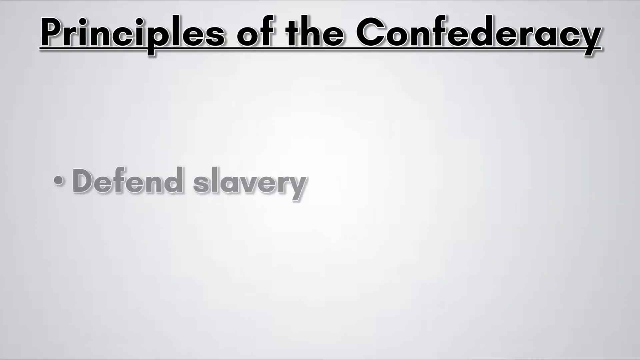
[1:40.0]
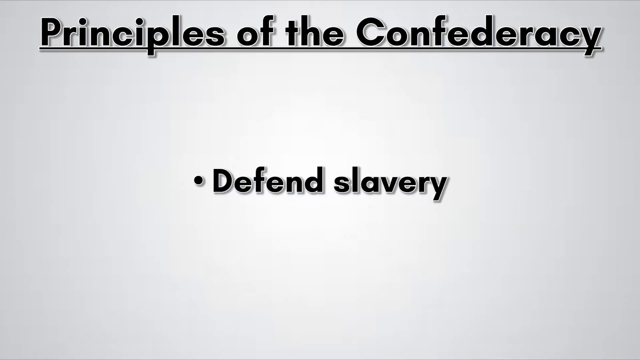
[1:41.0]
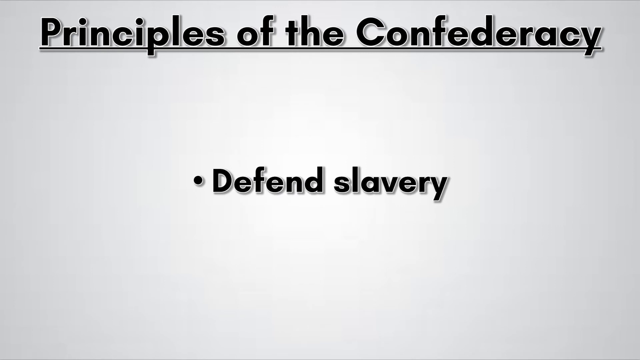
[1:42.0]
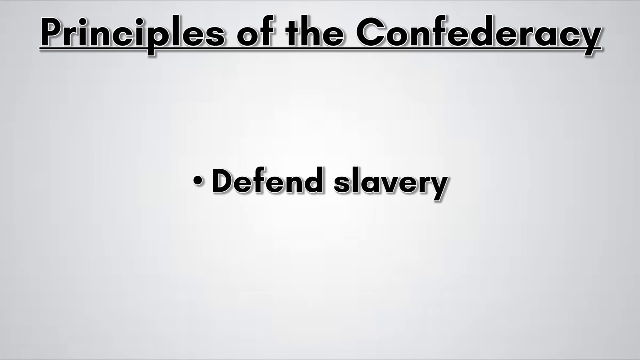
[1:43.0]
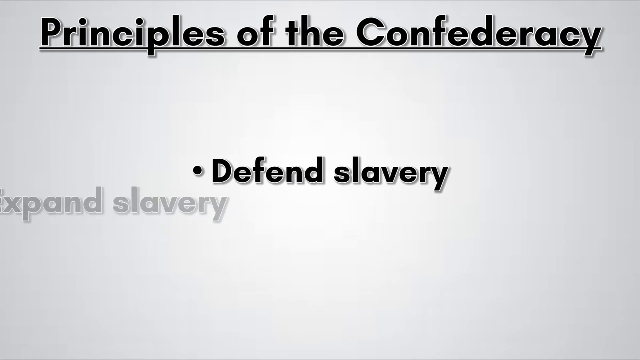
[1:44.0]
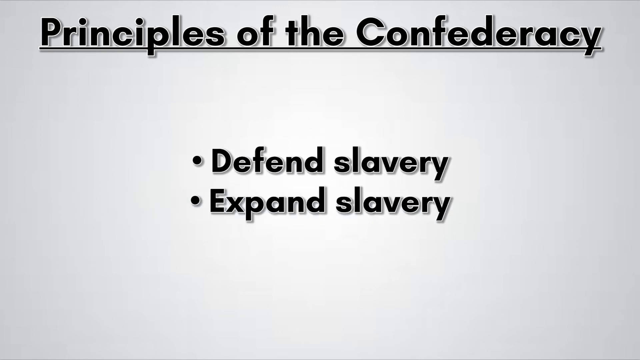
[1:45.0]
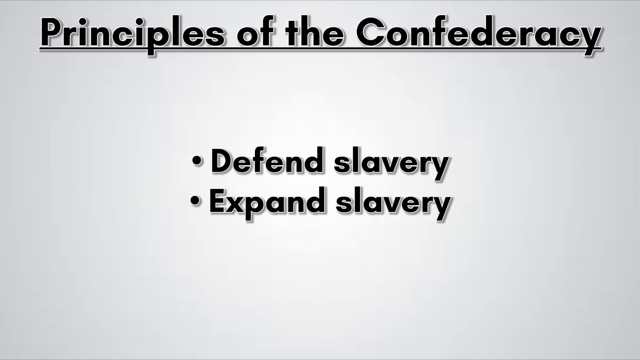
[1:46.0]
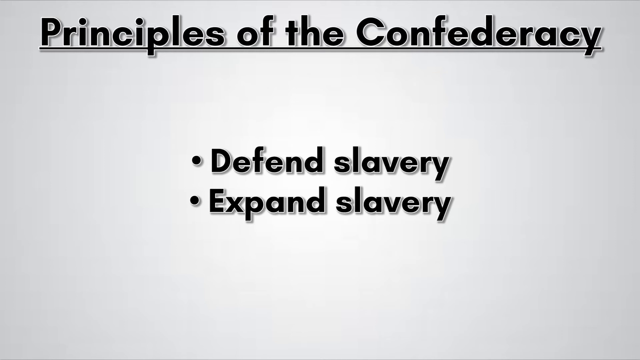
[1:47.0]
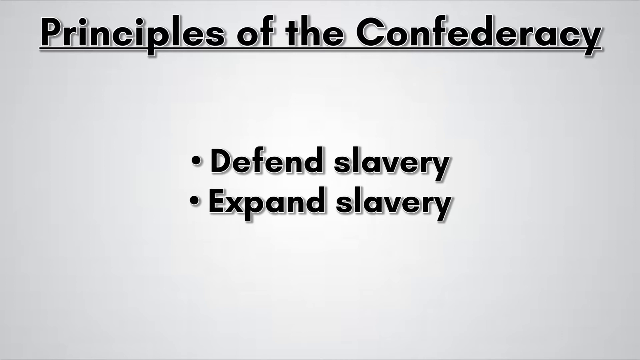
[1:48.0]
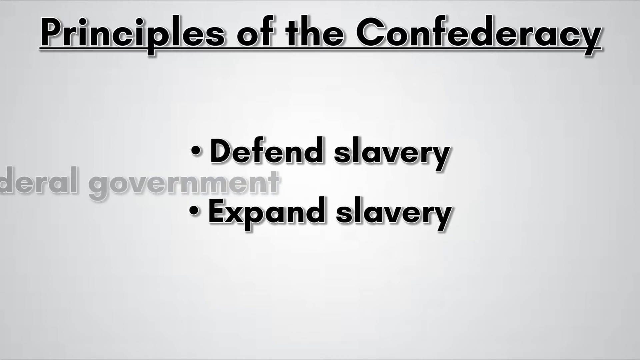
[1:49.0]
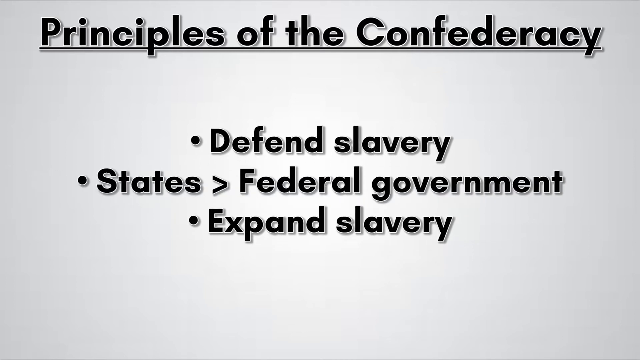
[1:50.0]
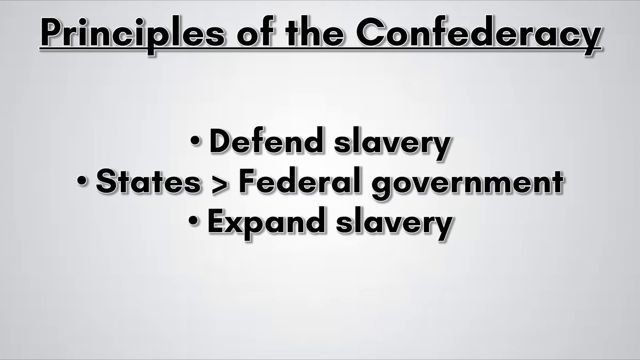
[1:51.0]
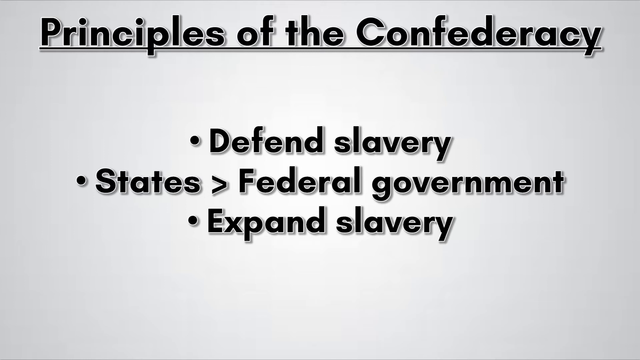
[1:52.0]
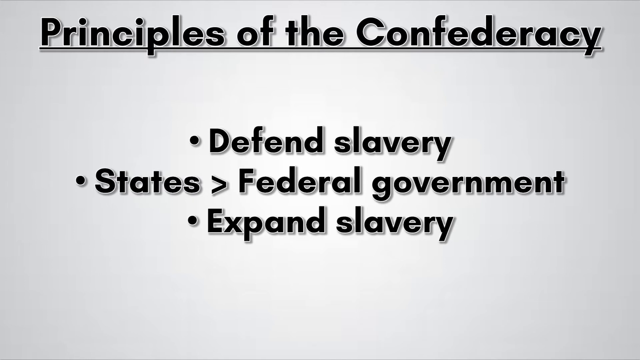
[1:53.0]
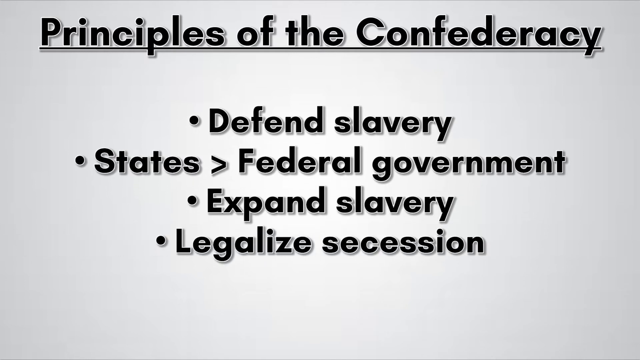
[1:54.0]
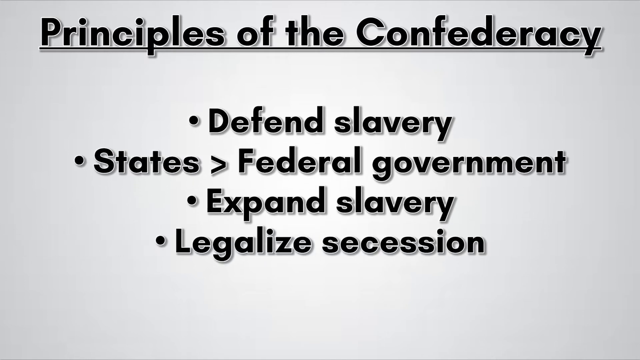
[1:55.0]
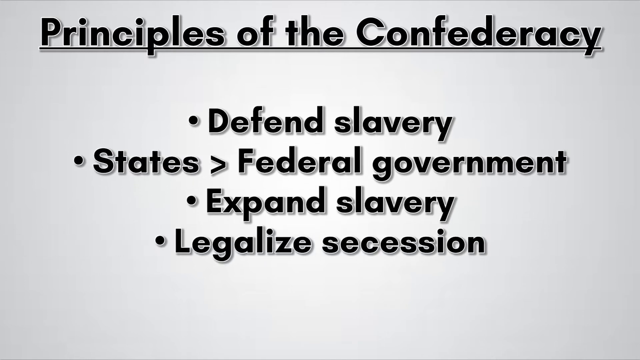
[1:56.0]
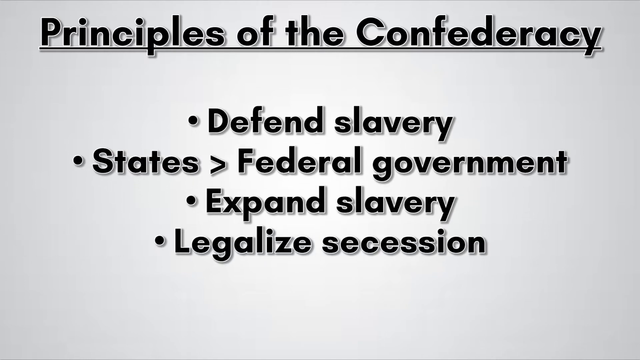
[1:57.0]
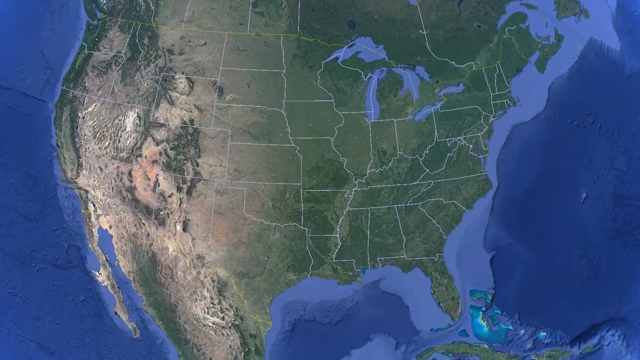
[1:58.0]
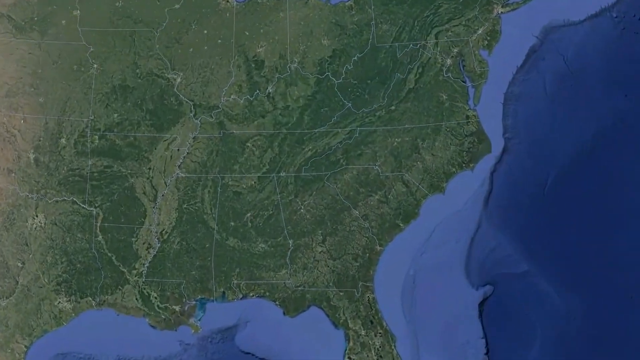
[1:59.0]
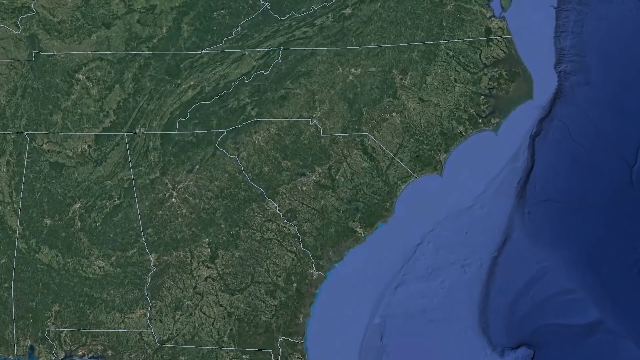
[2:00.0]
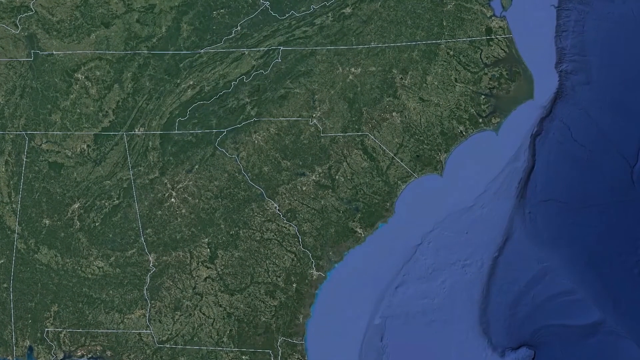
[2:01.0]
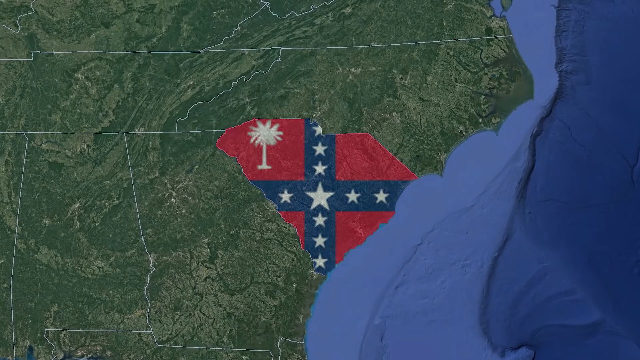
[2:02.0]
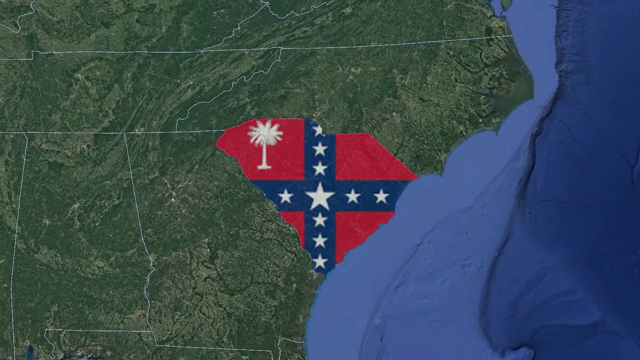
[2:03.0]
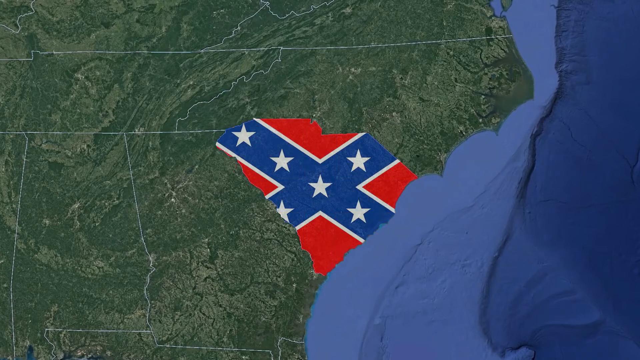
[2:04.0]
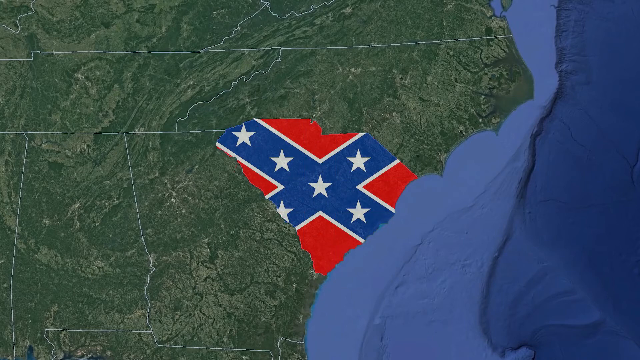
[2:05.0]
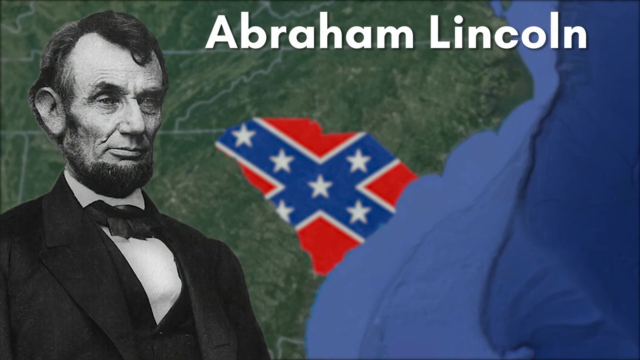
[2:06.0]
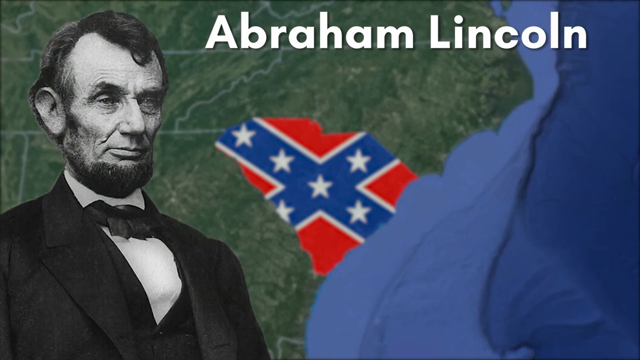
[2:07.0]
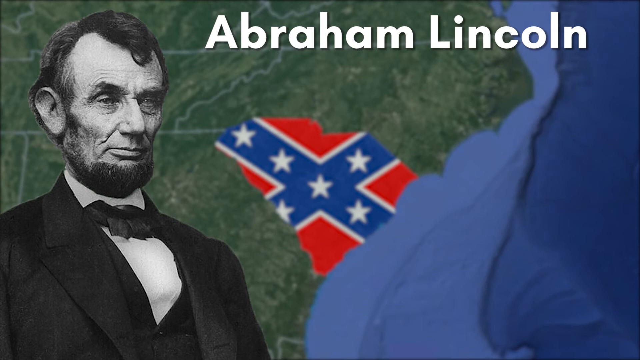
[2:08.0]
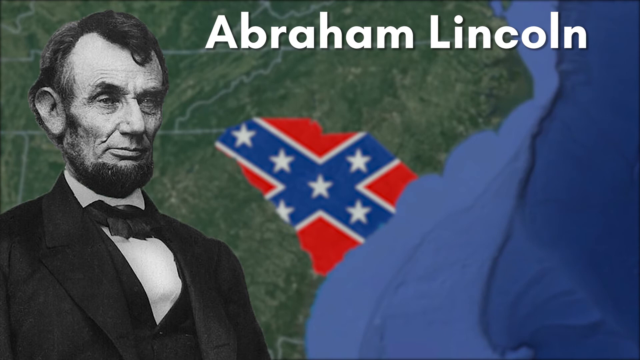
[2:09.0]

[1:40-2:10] The principles of the Confederacy are presented, concerning defending slavery, expanding slavery, and legalizing secession, from the state level up to the federal government. The map of the United States is then shown from an outer space point of view on the globe, with blue water turning light blue near the coastlines. It zooms in to the states of Kentucky, Tennessee, Georgia, Alabama, South Carolina, North Carolina and Virginia, which are all depicted in green. South Carolina is then shown colored in alone, and it switches to a Confederate flag. A depiction of one of Abraham Lincoln's famous pictures appears, with "Abraham Lincoln" written in white letters above South Carolina, now colored in with the Confederate flag logo. Abraham Lincoln wears a suit and bow tie.